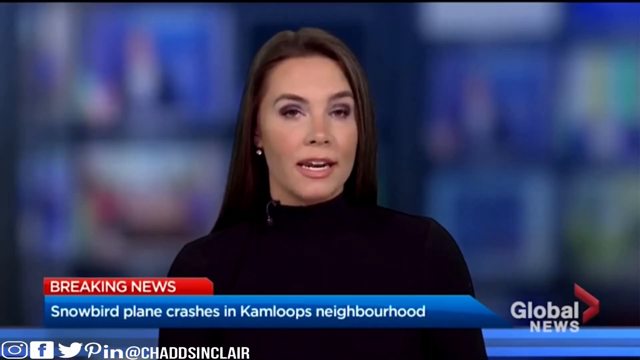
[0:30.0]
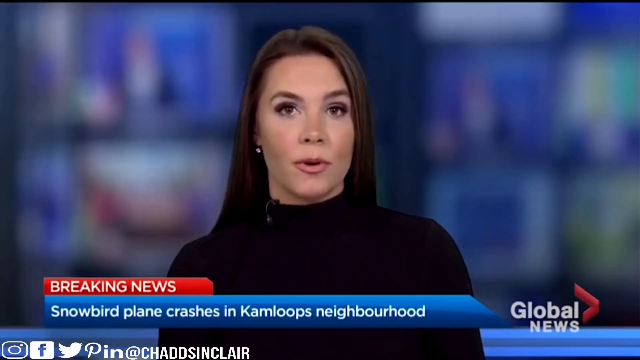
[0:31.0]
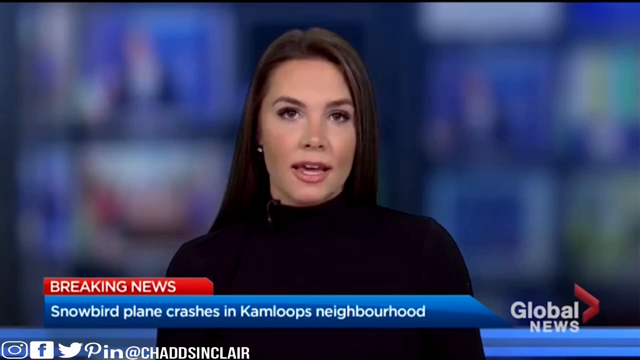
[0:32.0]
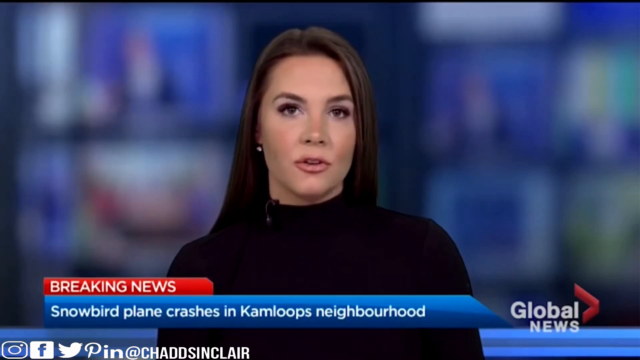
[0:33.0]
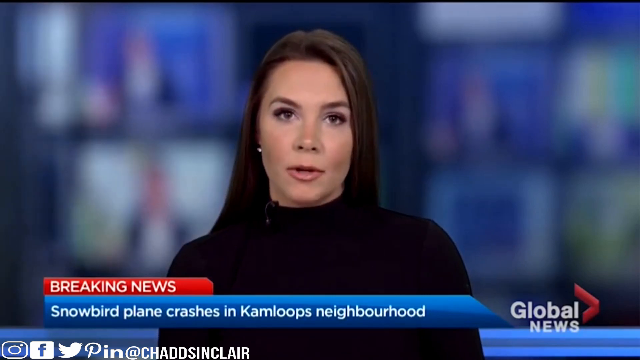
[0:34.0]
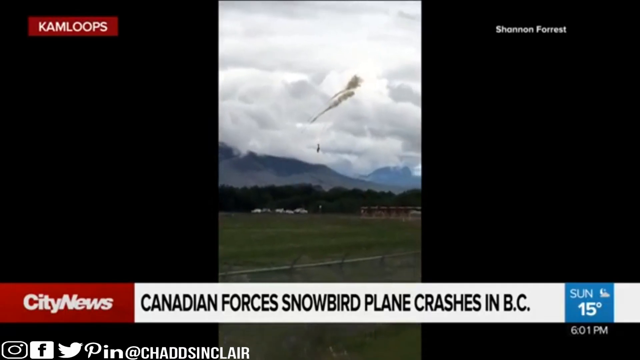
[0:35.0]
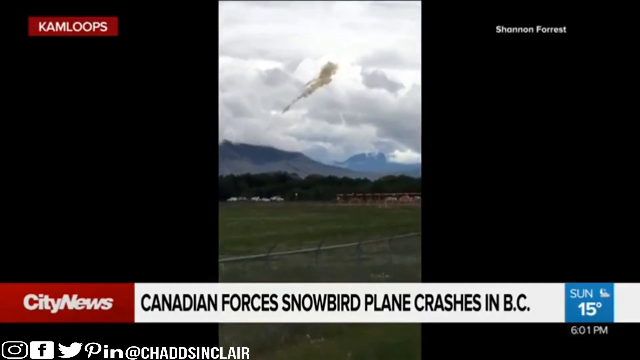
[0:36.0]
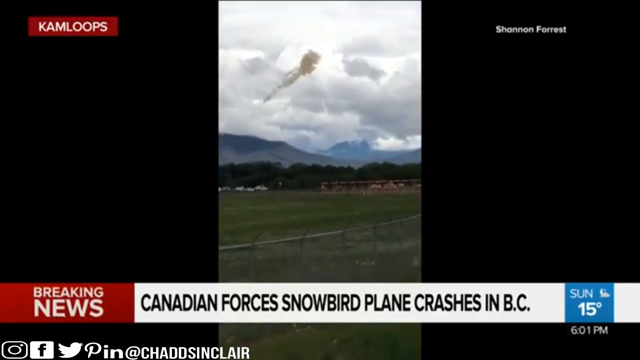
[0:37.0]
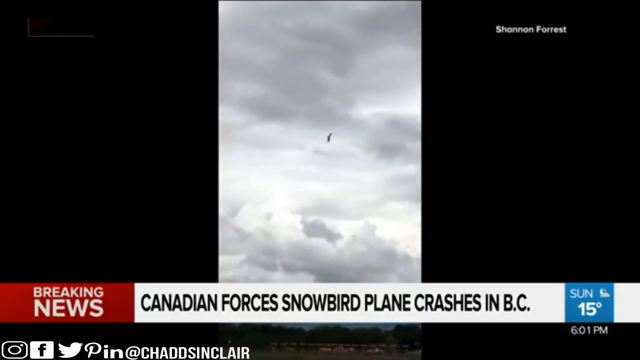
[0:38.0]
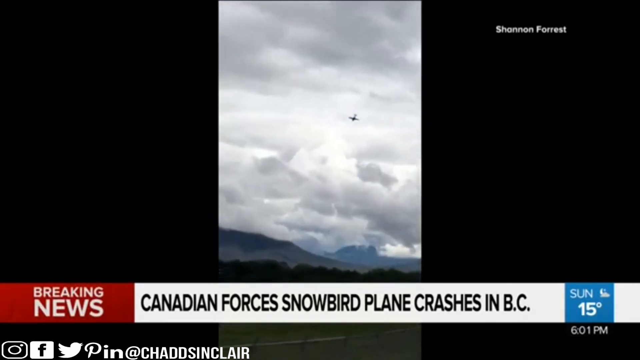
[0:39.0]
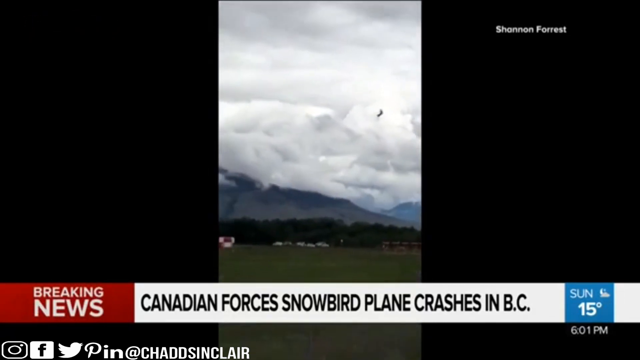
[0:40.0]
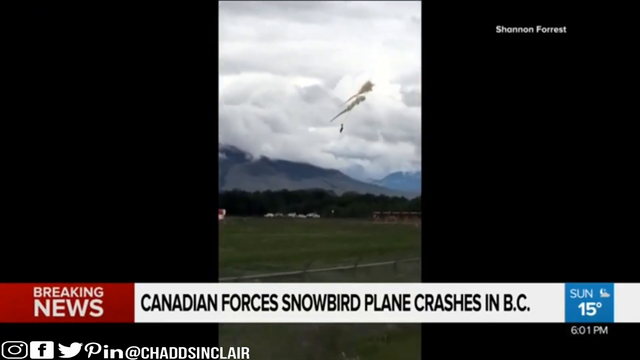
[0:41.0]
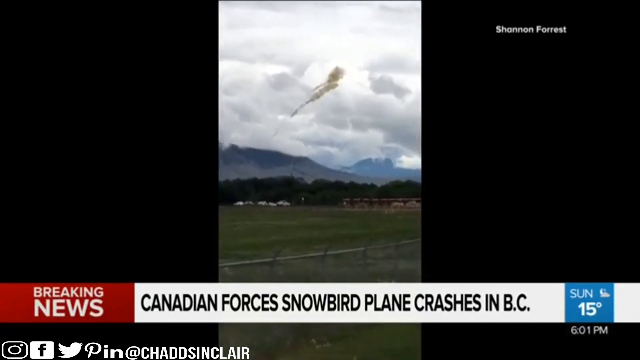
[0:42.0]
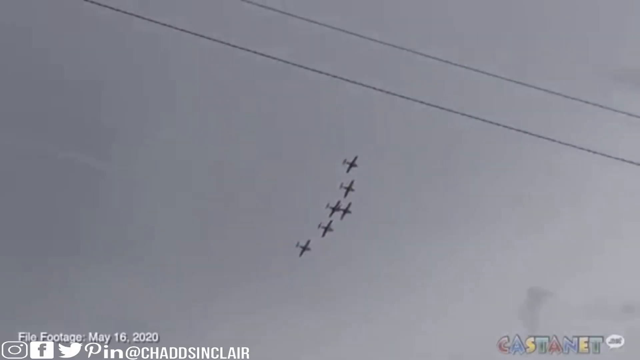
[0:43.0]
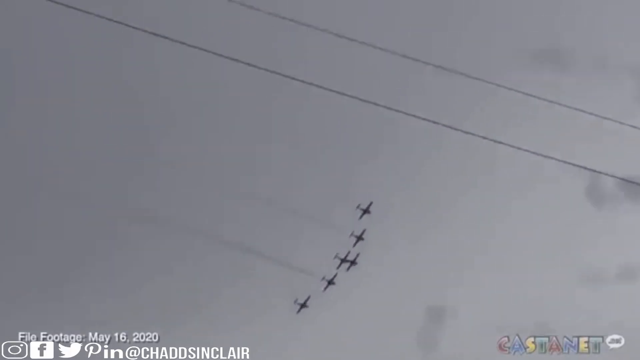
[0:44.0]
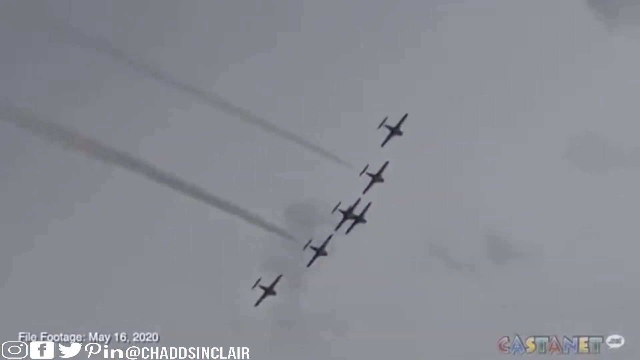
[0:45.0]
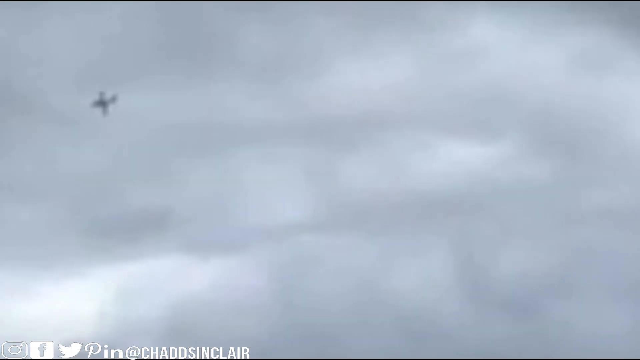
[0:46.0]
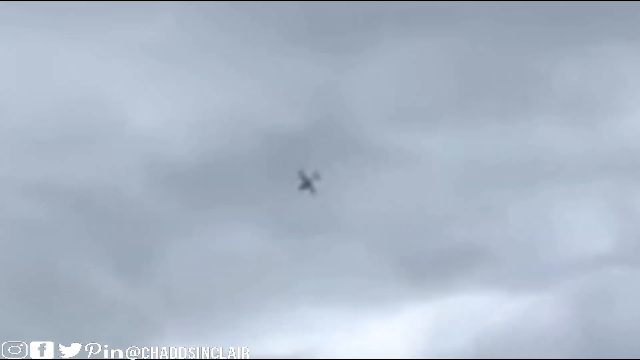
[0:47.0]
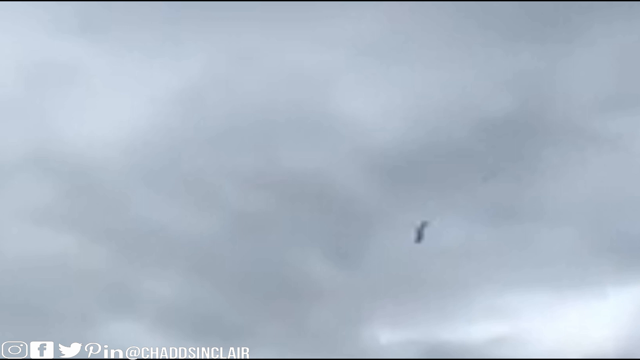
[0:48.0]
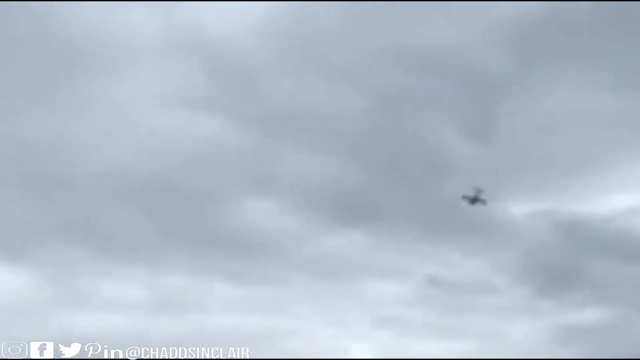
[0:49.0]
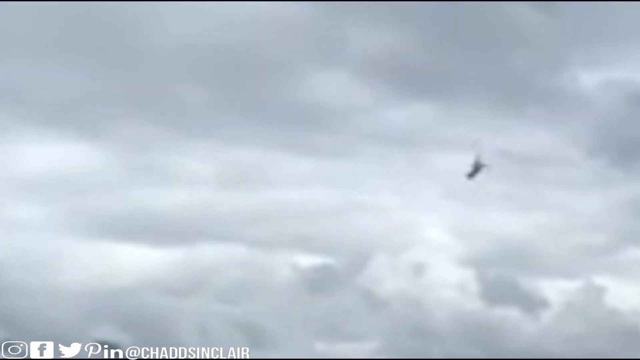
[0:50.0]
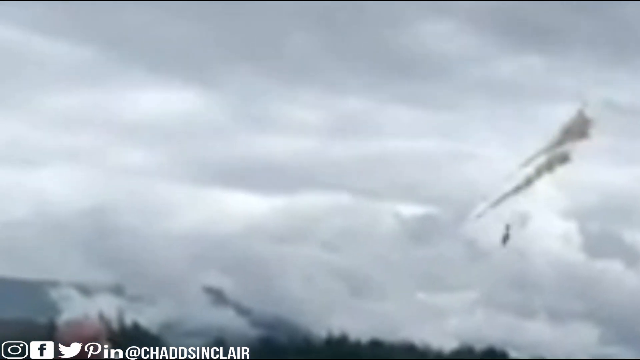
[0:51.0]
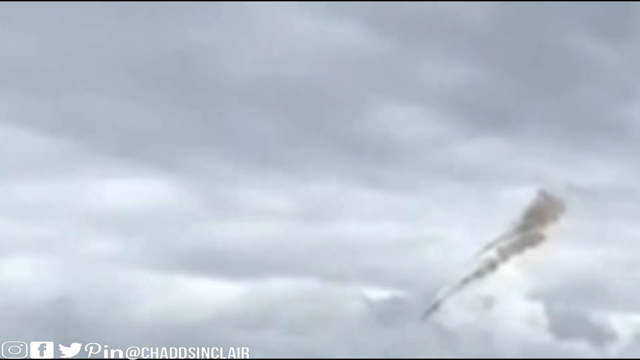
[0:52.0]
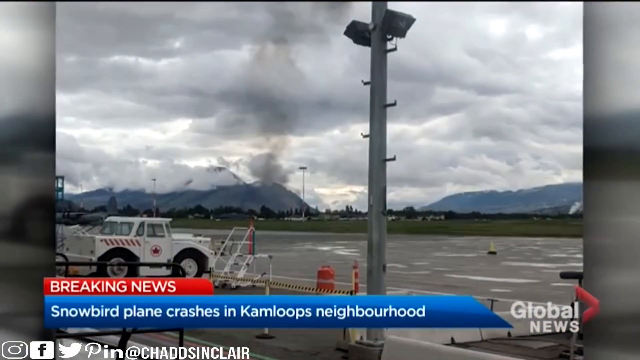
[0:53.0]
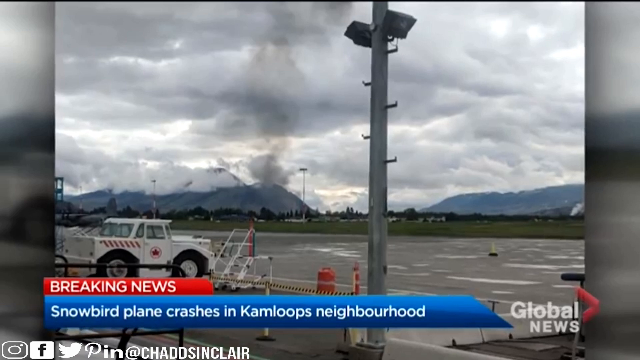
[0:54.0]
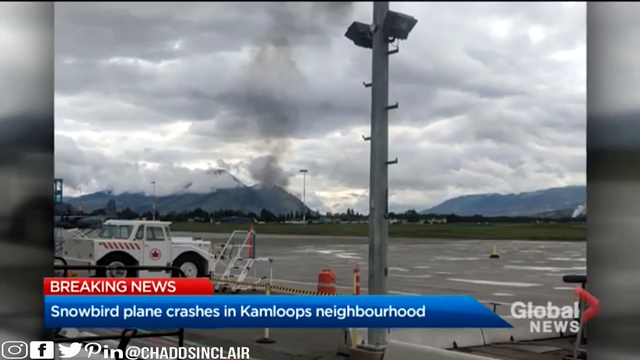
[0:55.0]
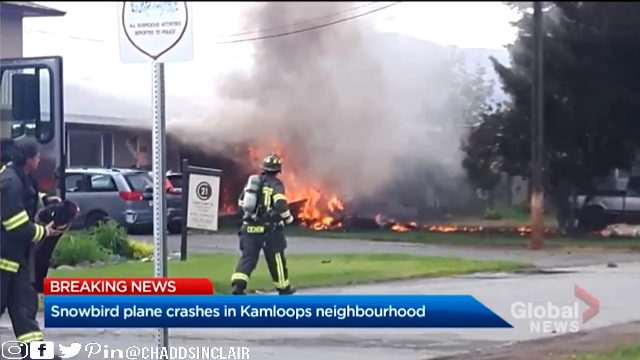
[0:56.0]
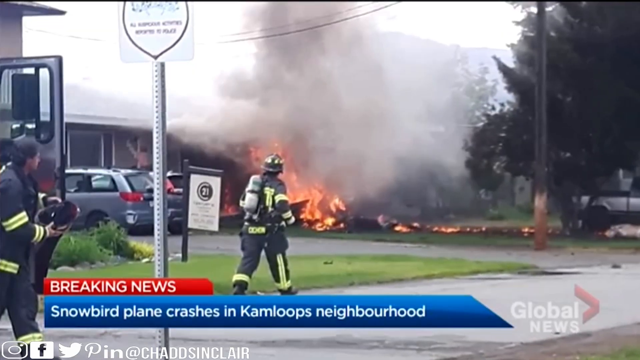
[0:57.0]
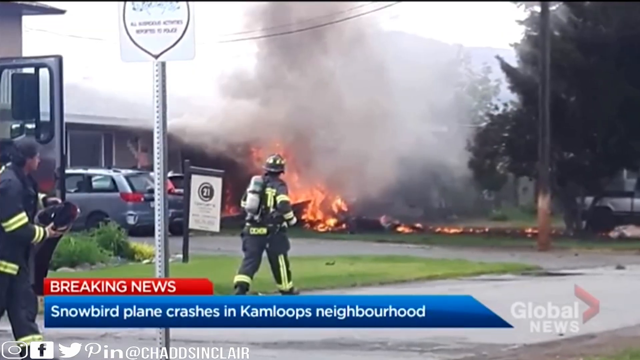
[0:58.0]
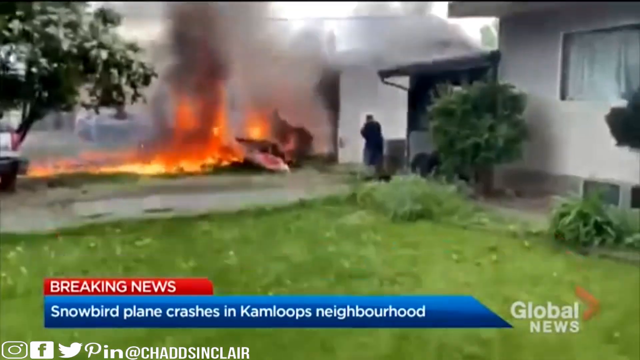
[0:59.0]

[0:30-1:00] The Caucasian lady in the black turtleneck appears with everything behind her blurred. Below her on the screen, a red rectangle reads "Breaking News," and under it a longer blue rectangle reads "plane crashes in Kamloops neighborhood." There is also some gray text that is sort of blurred, so not all of the wording is visible. The video returns to the footage of the plane flying in the cloudy sky and shows it starting to go down in the smoke, over a field with a line of trees. A closer view of the plane going down follows, in which only the back of the clouds is visible, and then the camera zooms back out to the field. Next, six airplanes fly in a row across a cloudy sky, to the left of electrical lines visible in the sky. The view zooms in so they are closer, then goes right back to the zoomed-in shot of the crashing plane. The crash site is then shown from a distance, with a small white Bronco-type vehicle on the left of the frame. The video then goes to firemen fighting a fire on a house that the plane hit, with orange flames coming from the house.